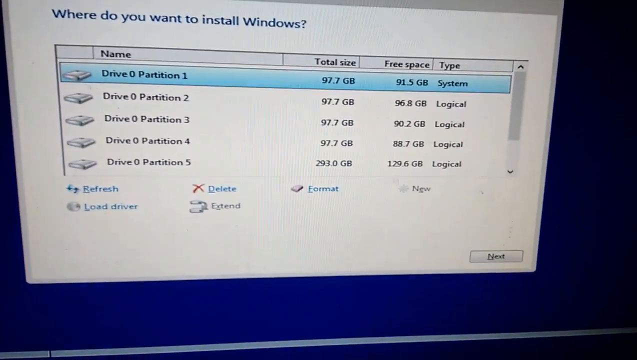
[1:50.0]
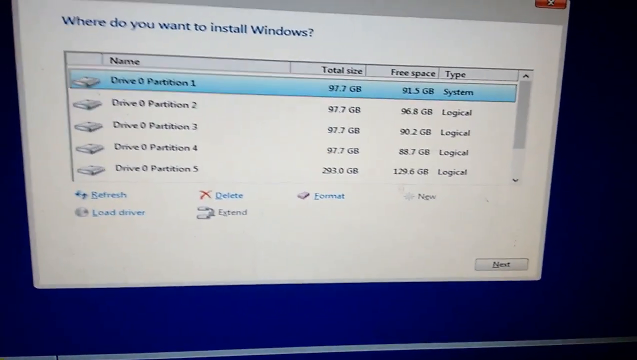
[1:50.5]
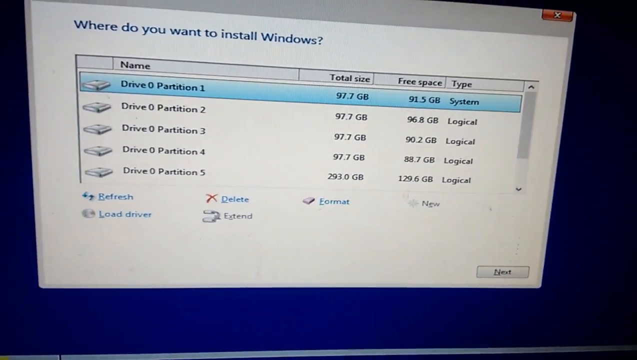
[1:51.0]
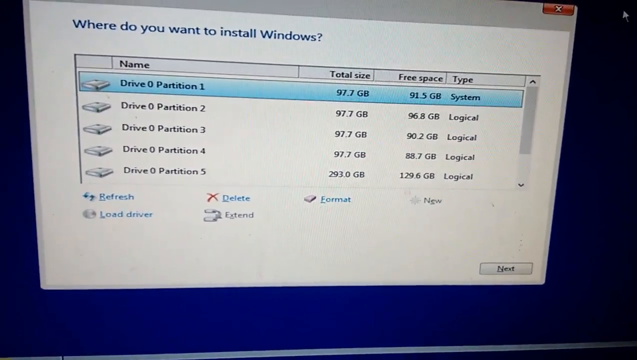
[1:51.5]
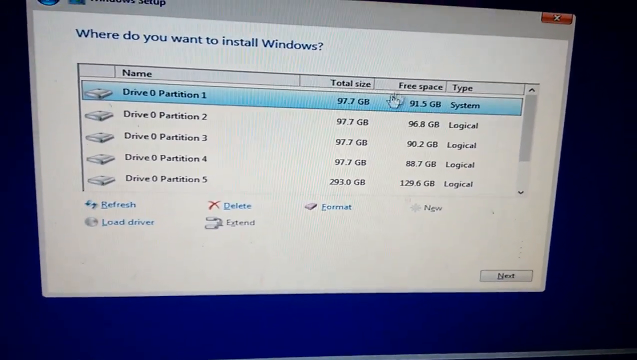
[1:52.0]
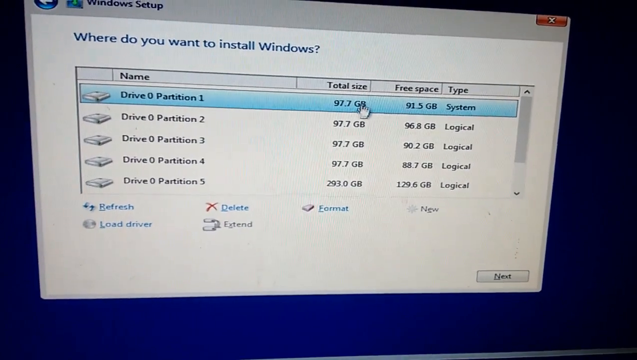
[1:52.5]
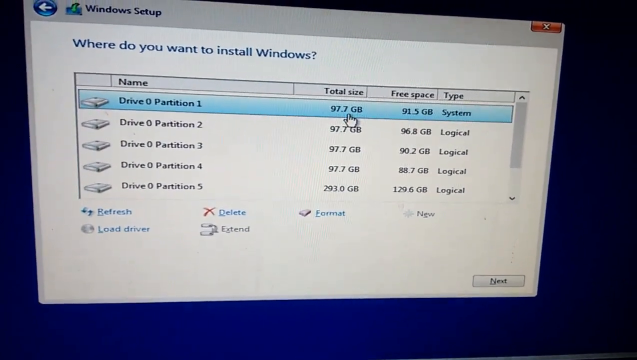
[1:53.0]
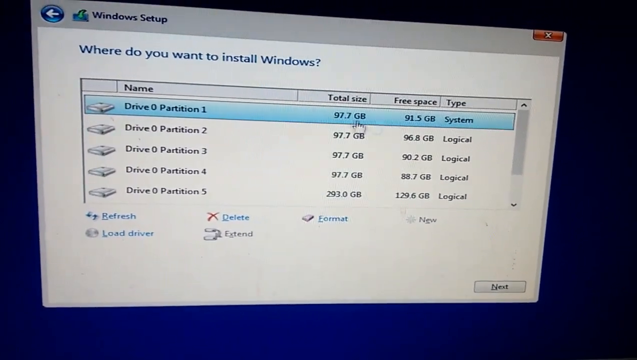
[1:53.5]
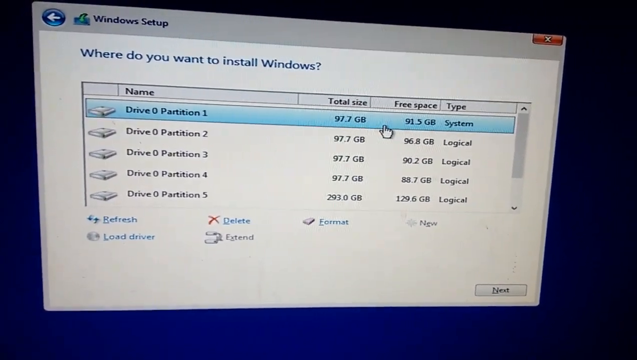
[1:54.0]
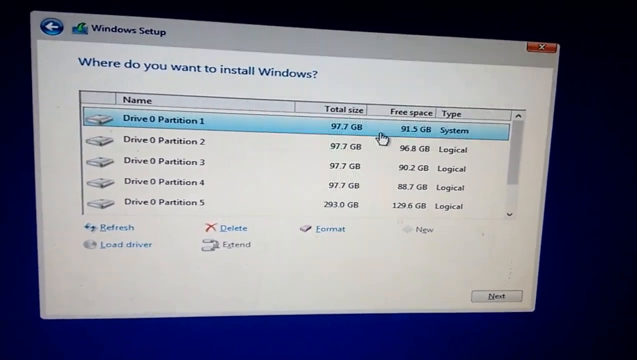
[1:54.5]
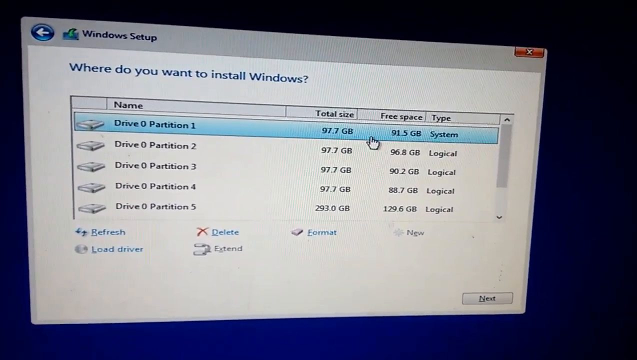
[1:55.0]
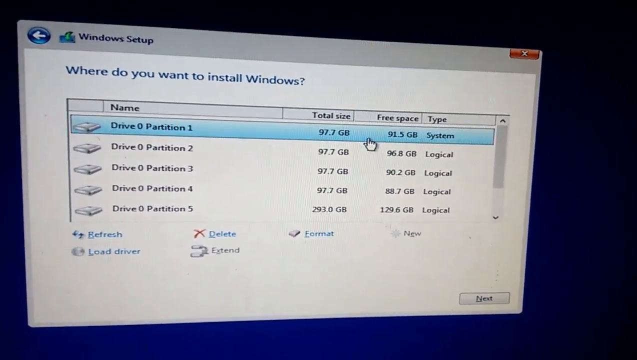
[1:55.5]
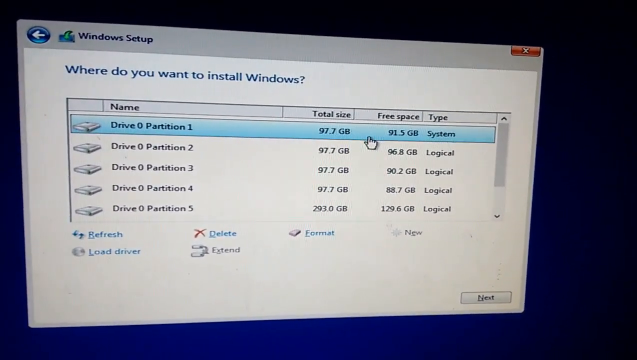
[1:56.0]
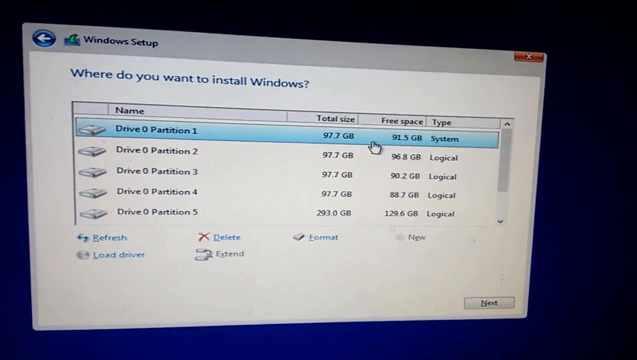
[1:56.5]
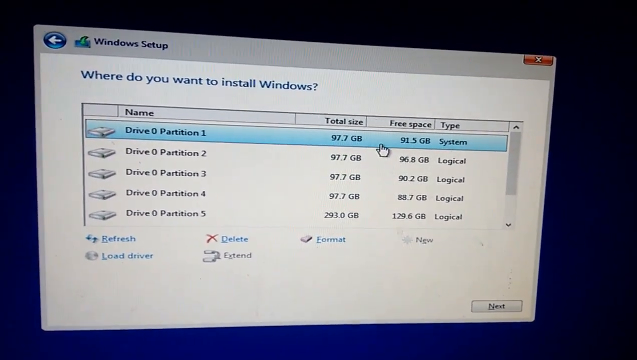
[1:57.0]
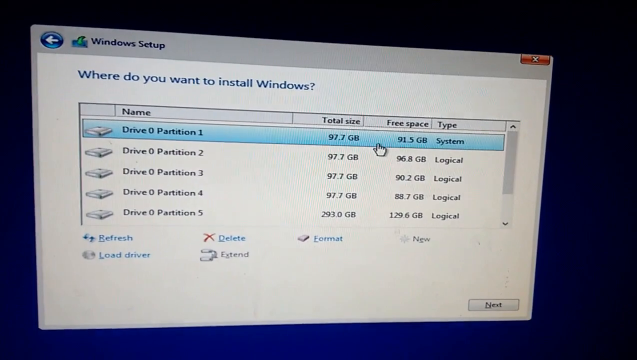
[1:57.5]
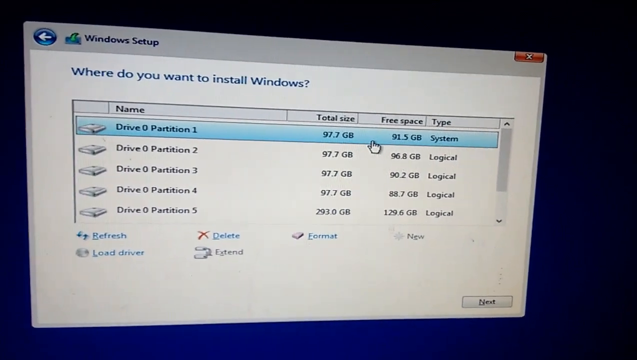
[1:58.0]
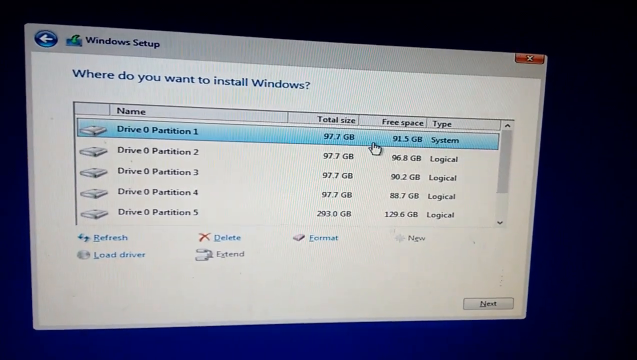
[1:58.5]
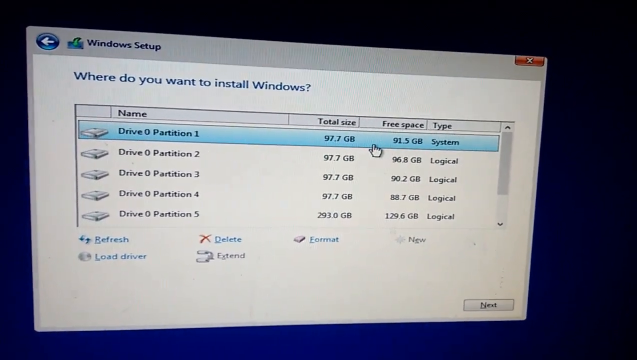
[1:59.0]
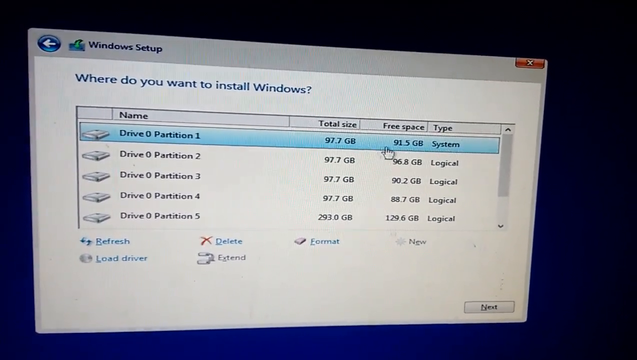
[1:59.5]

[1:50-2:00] Drive 0 Partition 1 is selected, showing a total size of 97 gigabytes and 91 gigabytes free. He has not clicked the Next button; he has only selected the partition and seems to be evaluating which one to use. The partitions show a size of 97.7 gigabytes with about 90 gigabytes free. Under type, partition 1 is System, and partitions 2, 3, 4 and 5 are Logical. He looks a little confused about where to go next.